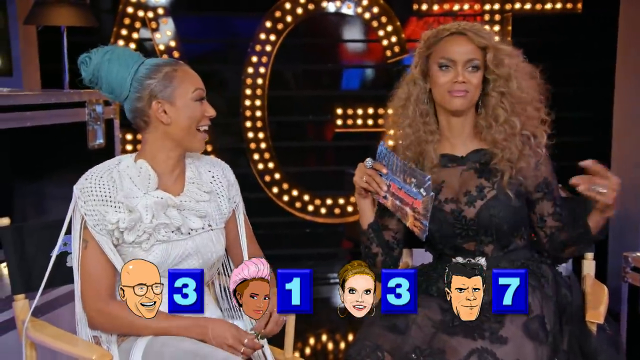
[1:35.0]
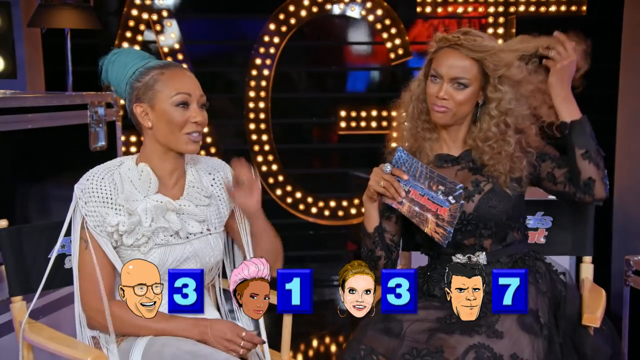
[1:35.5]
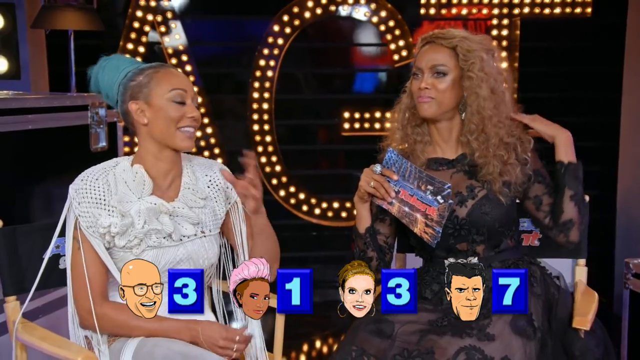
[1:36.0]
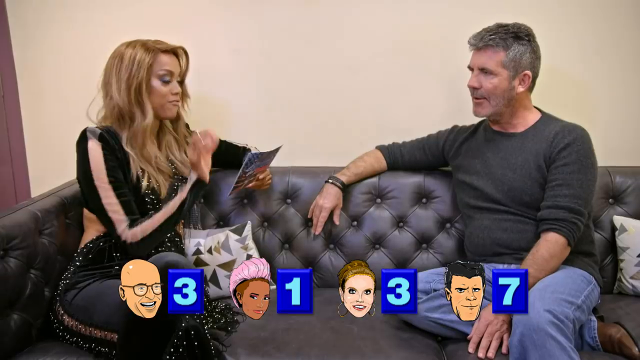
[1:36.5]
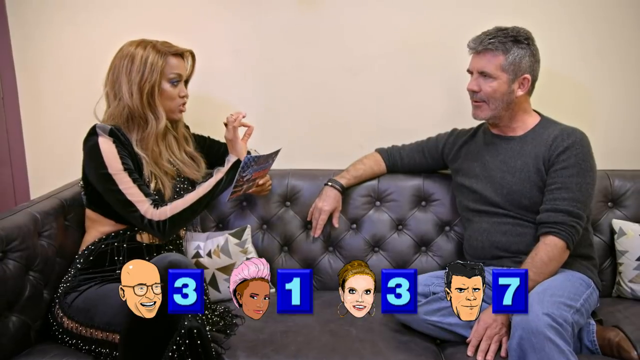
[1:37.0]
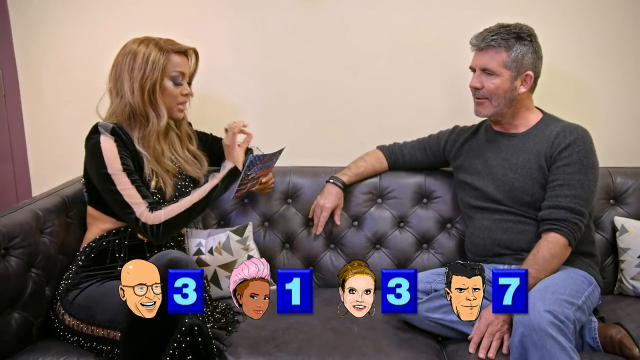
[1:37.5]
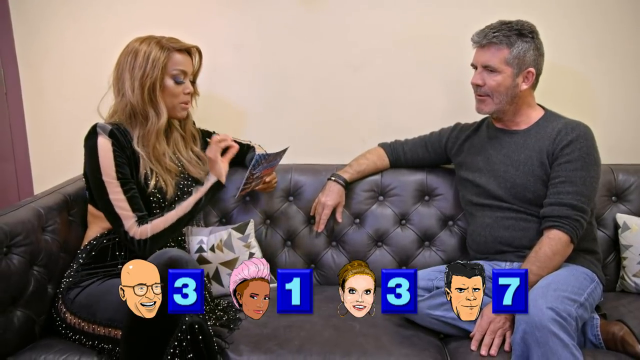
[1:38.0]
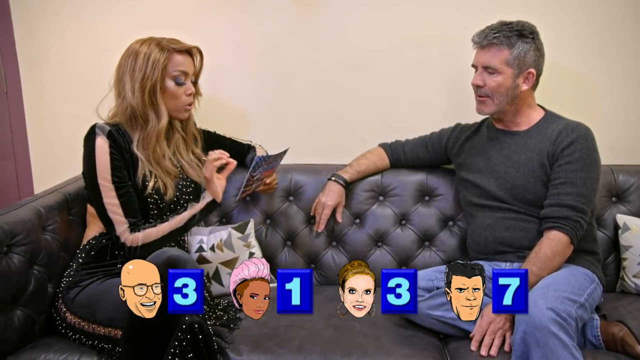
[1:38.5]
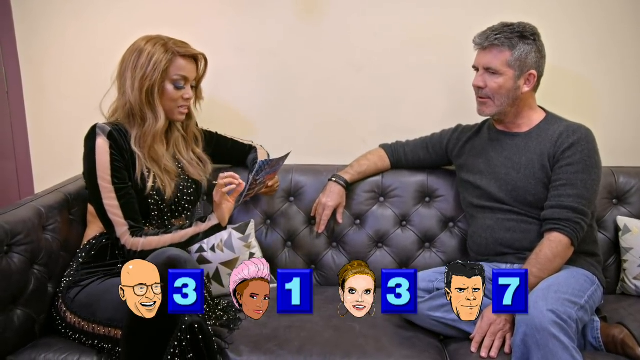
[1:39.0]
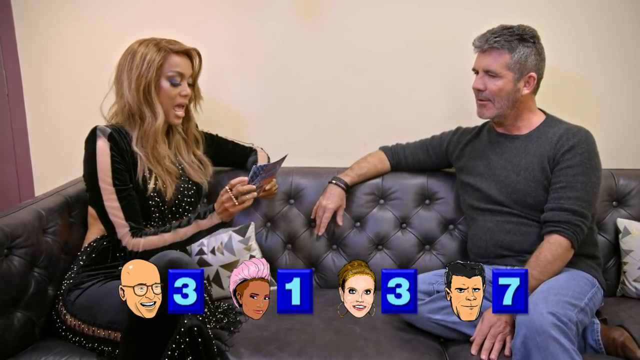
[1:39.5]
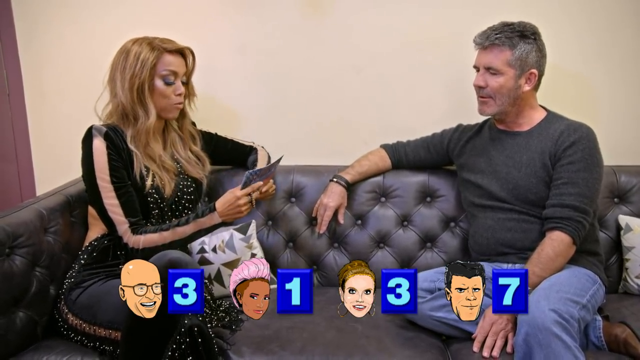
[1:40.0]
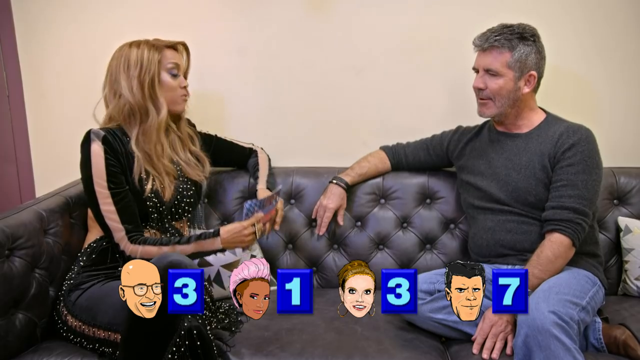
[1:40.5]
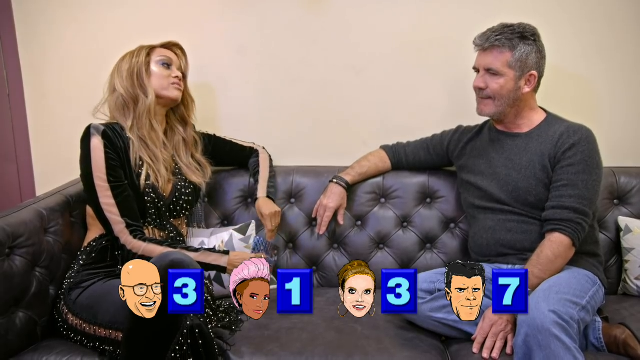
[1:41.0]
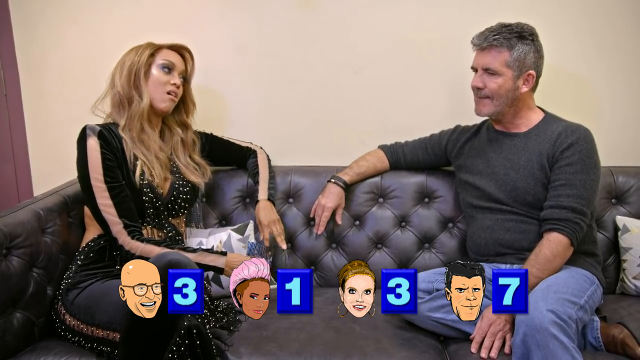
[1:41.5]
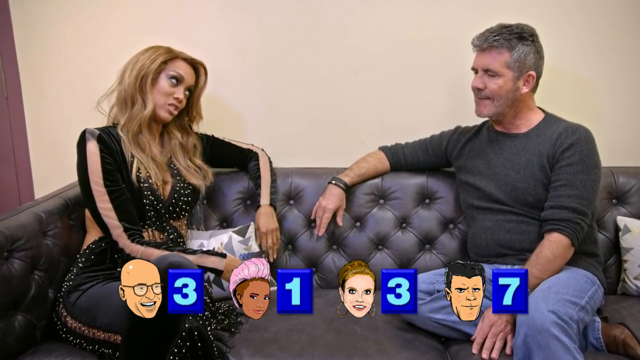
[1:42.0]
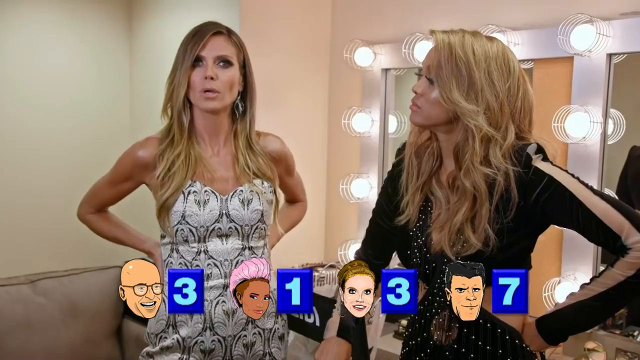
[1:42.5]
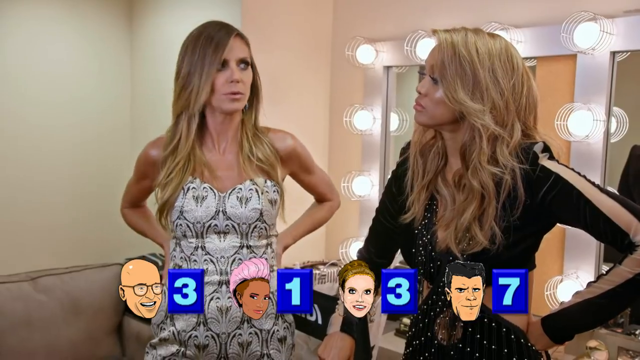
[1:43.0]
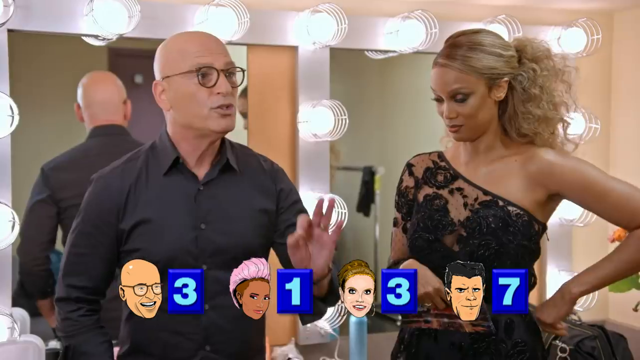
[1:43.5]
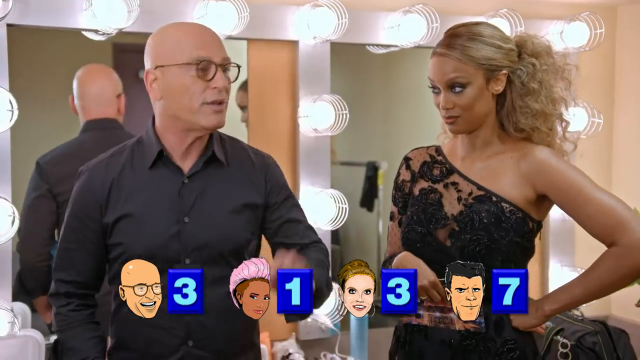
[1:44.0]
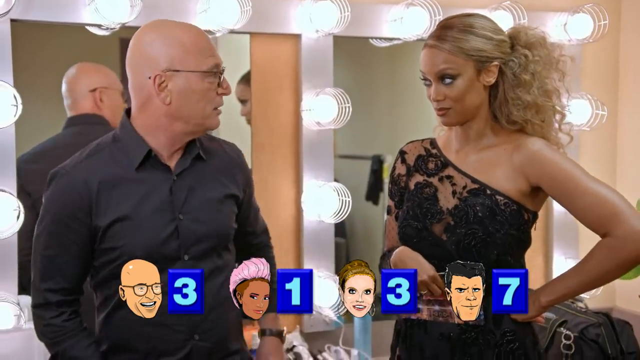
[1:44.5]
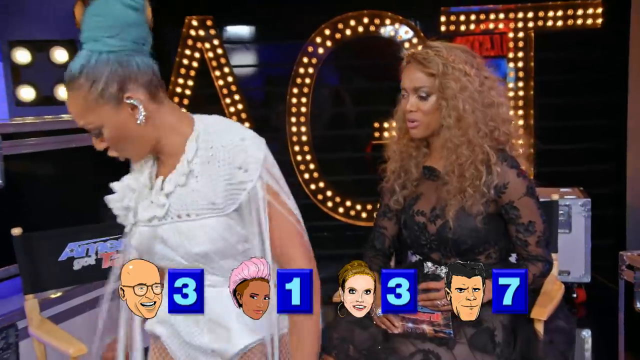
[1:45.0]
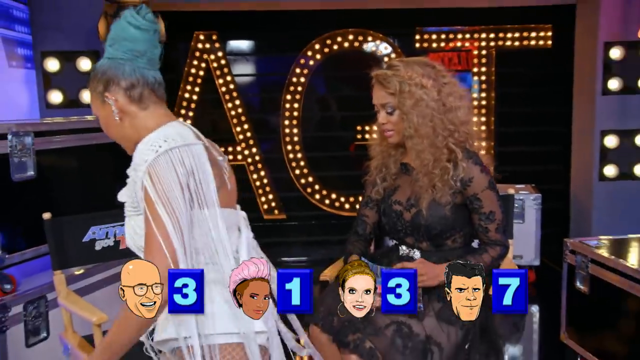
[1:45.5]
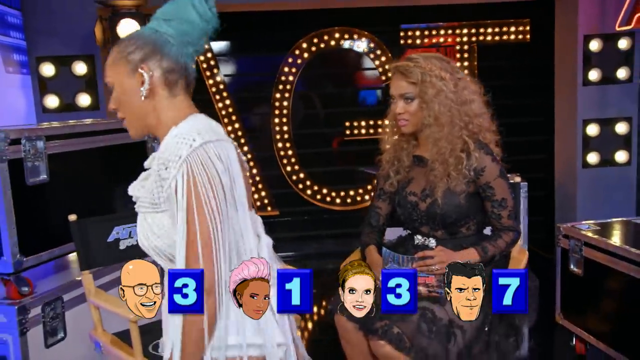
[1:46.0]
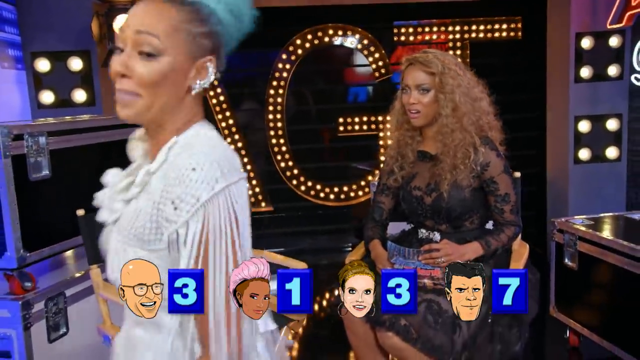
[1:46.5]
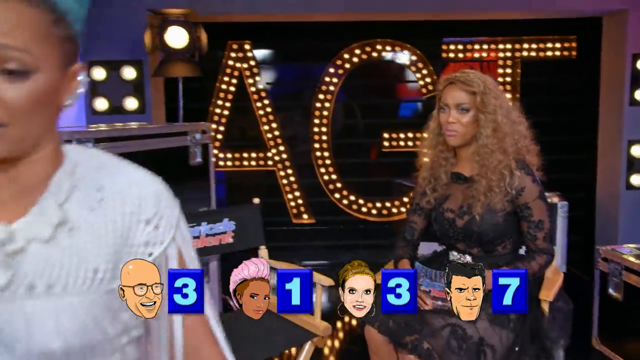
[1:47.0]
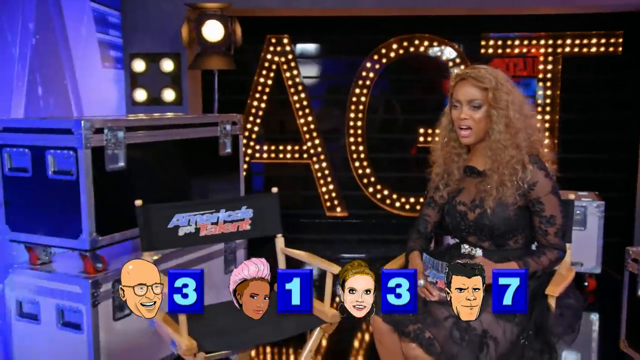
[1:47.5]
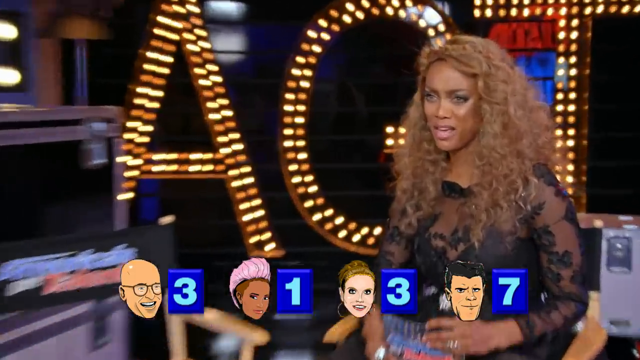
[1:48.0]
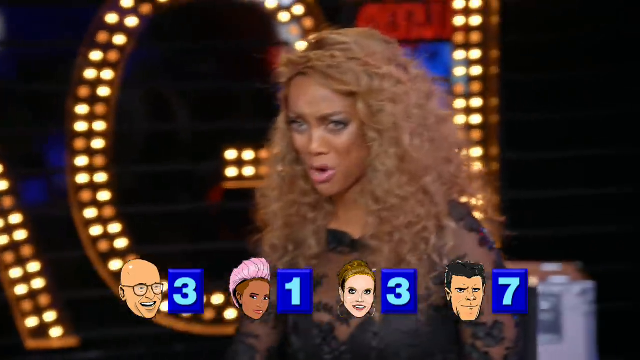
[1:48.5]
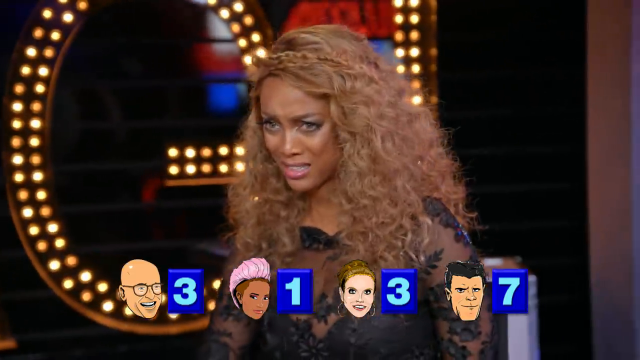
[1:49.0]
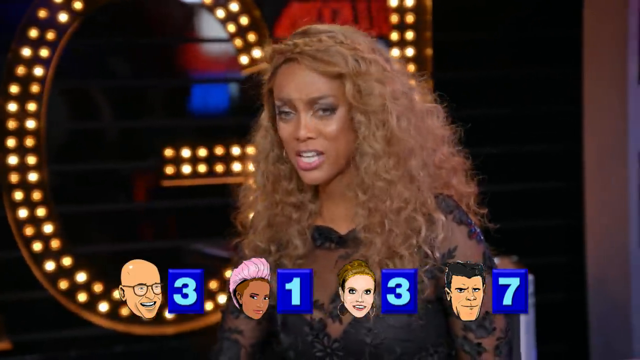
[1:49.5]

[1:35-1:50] Tyra speaks to Simon Cowell on a couch, the two looking at each other, while she reads questions from a note card. There are scorecards for each of the judges. In another part, the darker-skinned woman judge gets up and leaves, and Tyra says something as she walks out, kind of with a disgusted face. Tyra grills Howie Mandel, who makes a statement with his hand, a gesture that looks very serious and defensive. Tyra also grills Heidi Klum, who has her hands on her hips with her elbows pointing back and is kind of swinging as Tyra speaks; Heidi does not look amused at all.